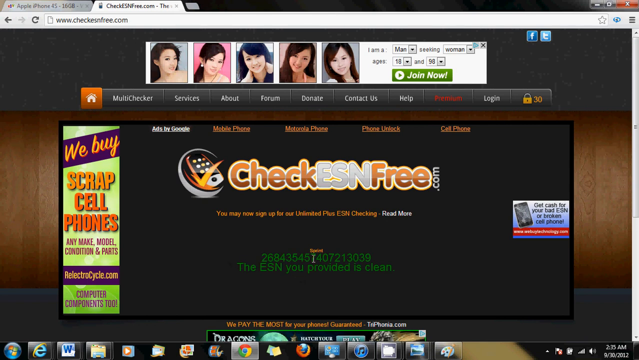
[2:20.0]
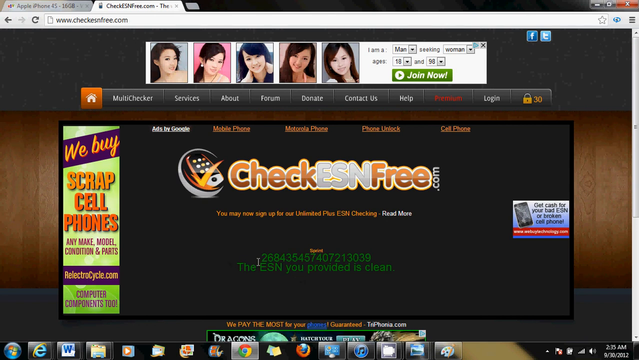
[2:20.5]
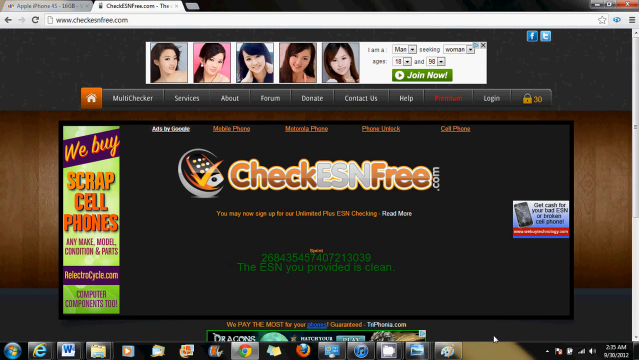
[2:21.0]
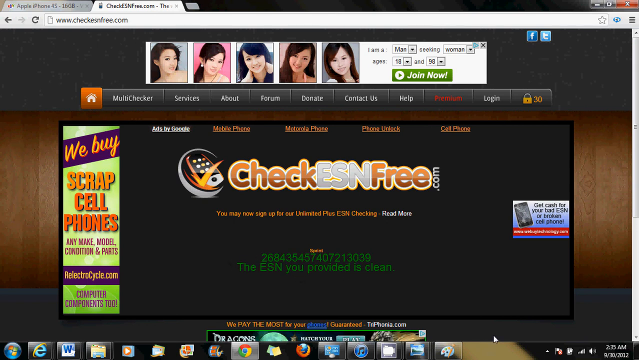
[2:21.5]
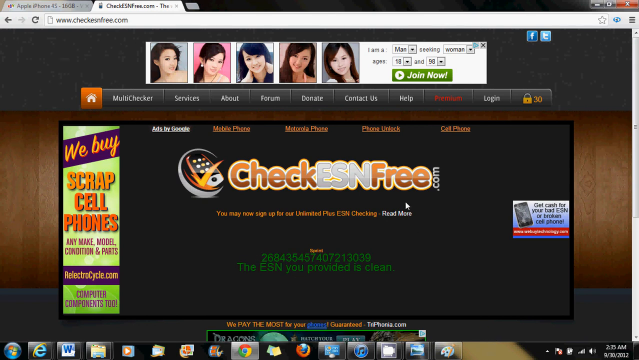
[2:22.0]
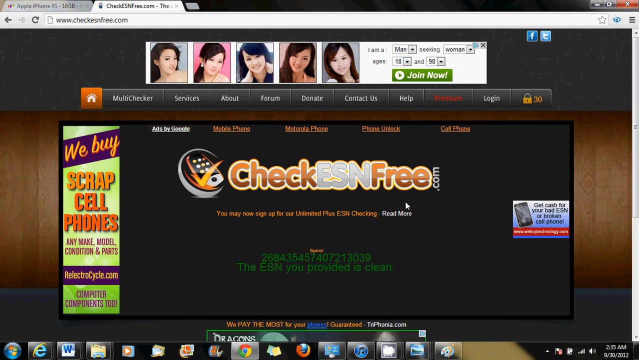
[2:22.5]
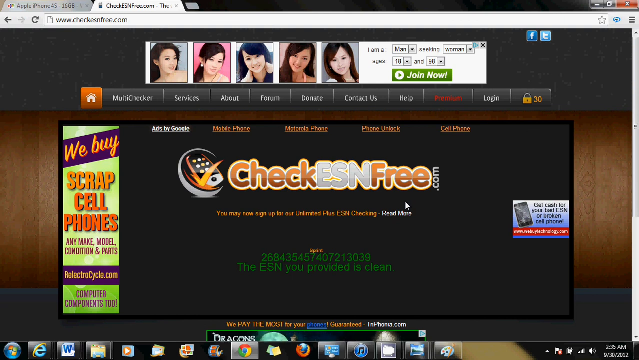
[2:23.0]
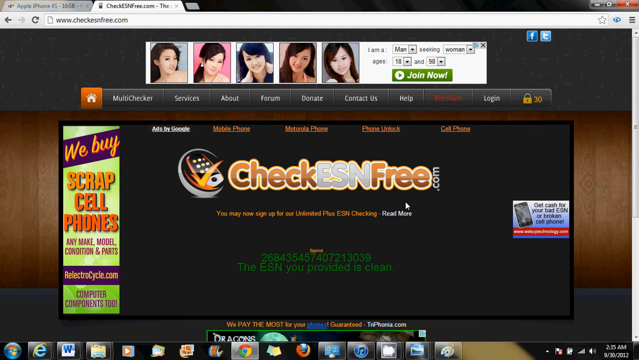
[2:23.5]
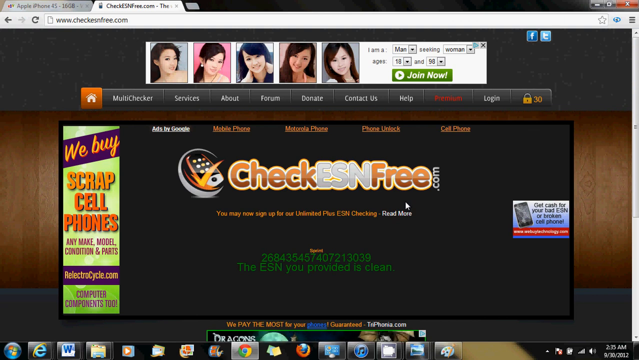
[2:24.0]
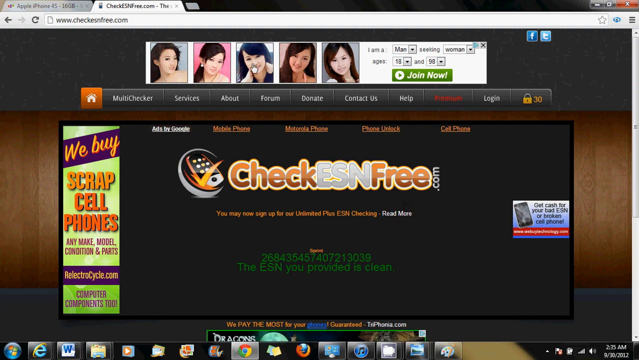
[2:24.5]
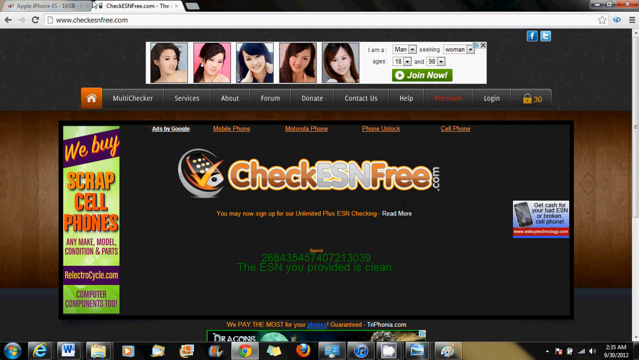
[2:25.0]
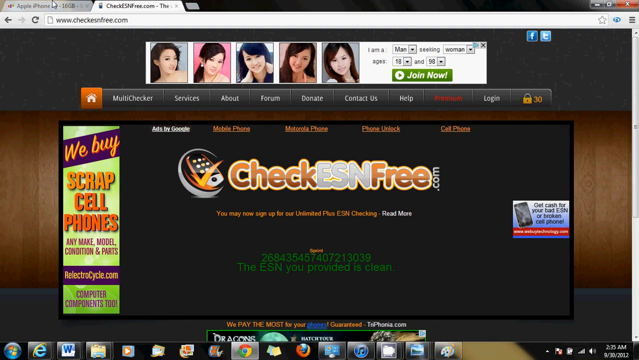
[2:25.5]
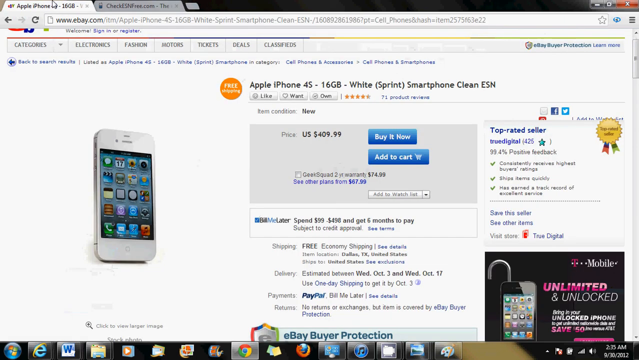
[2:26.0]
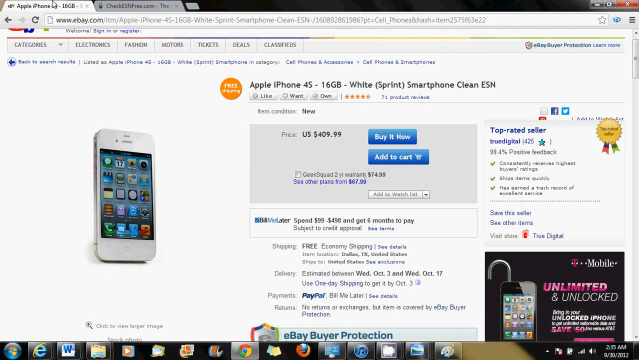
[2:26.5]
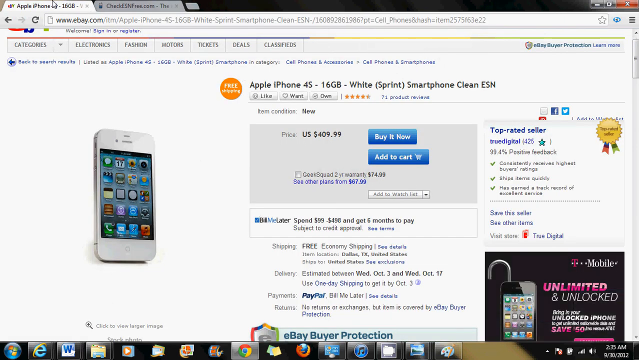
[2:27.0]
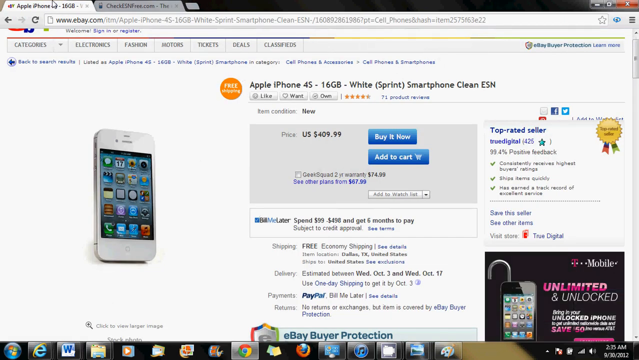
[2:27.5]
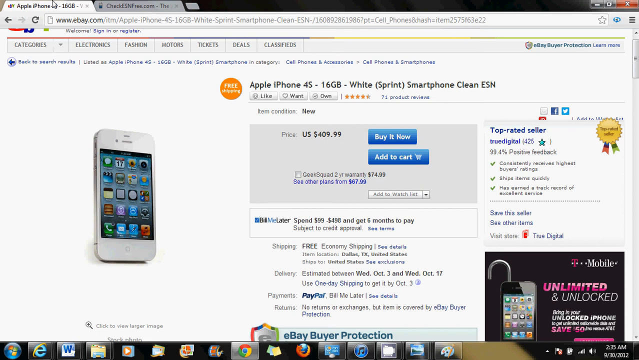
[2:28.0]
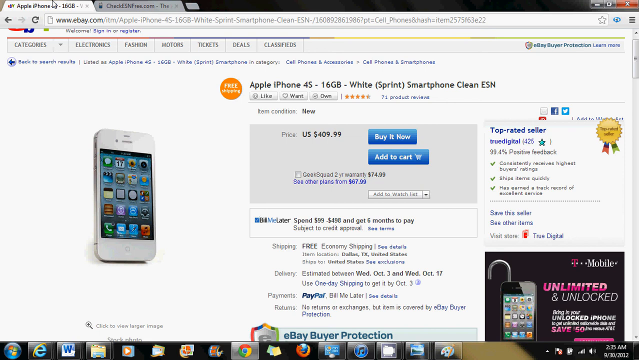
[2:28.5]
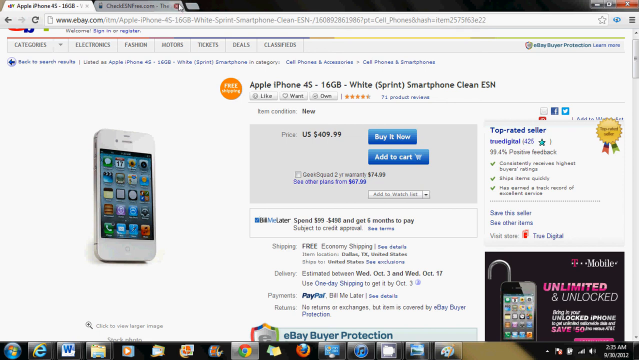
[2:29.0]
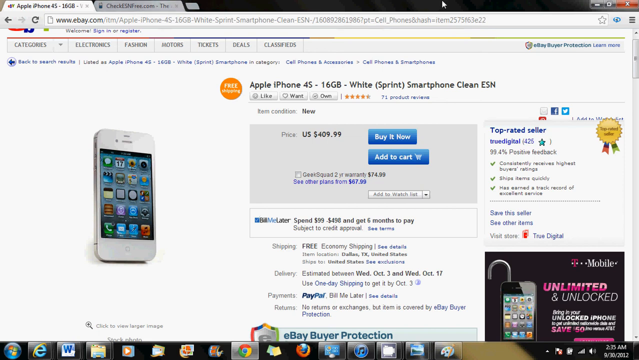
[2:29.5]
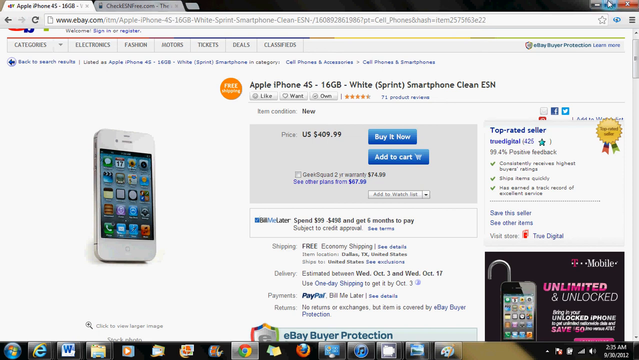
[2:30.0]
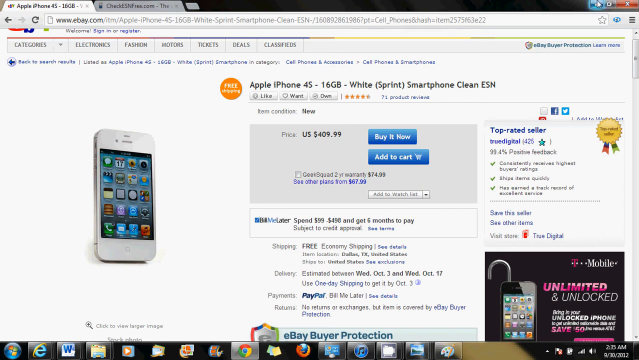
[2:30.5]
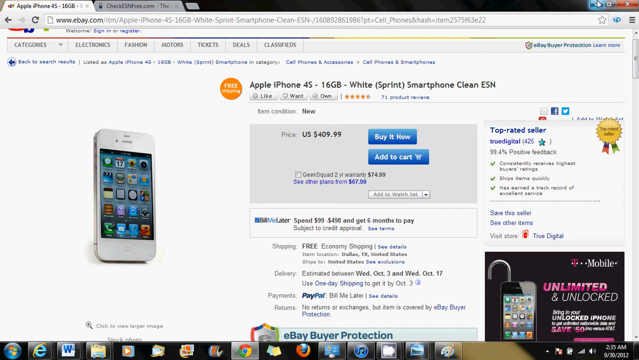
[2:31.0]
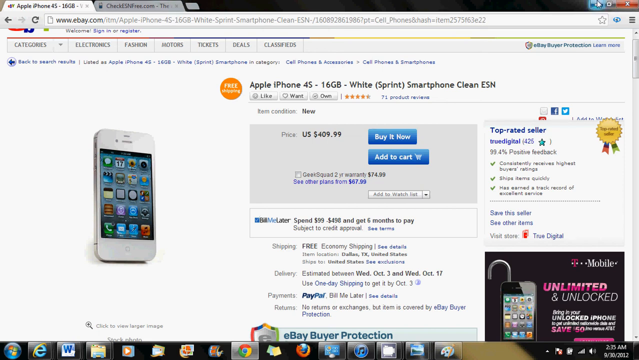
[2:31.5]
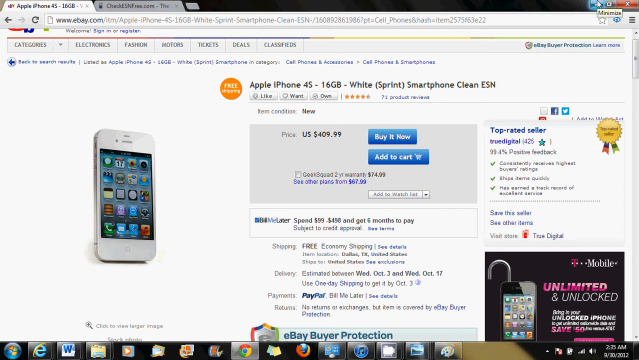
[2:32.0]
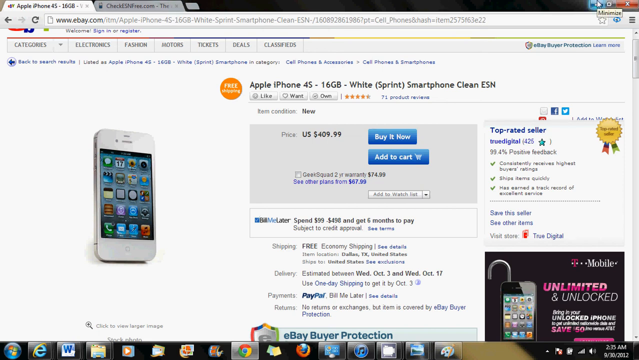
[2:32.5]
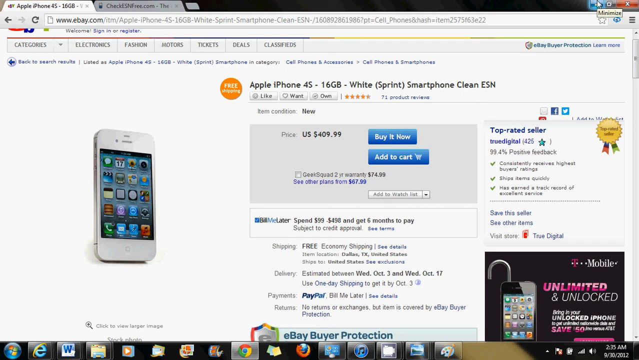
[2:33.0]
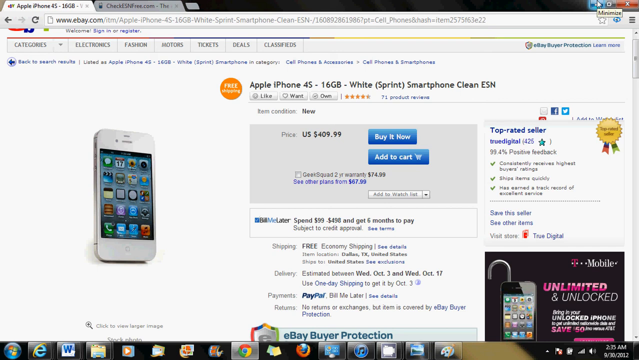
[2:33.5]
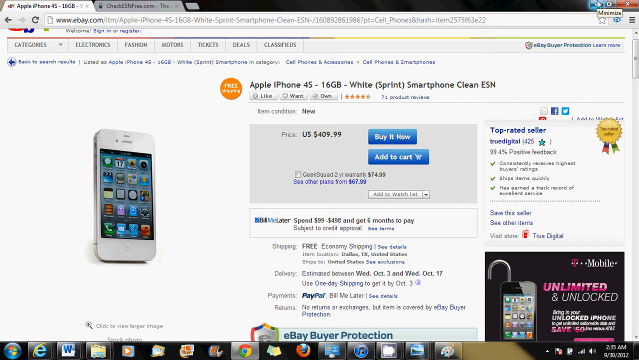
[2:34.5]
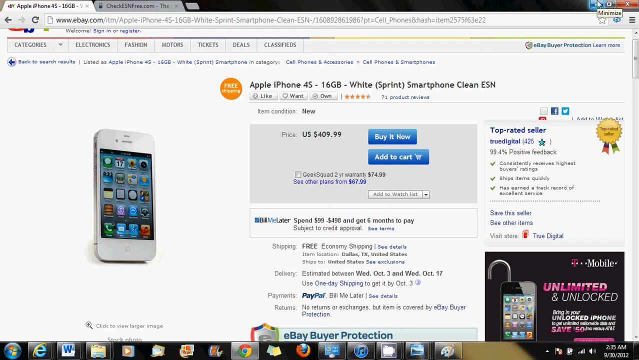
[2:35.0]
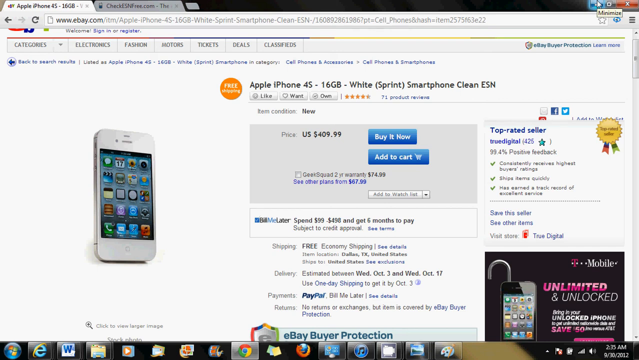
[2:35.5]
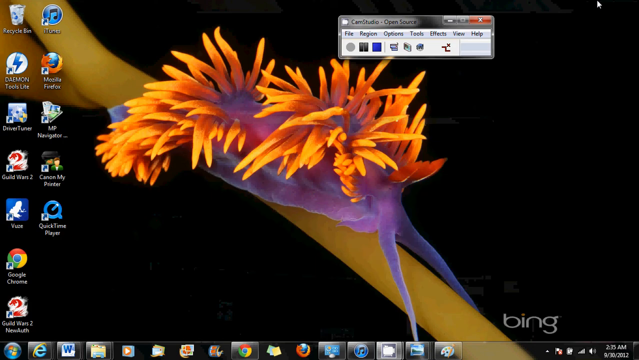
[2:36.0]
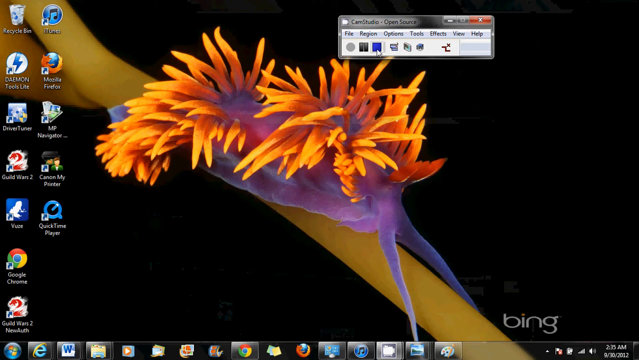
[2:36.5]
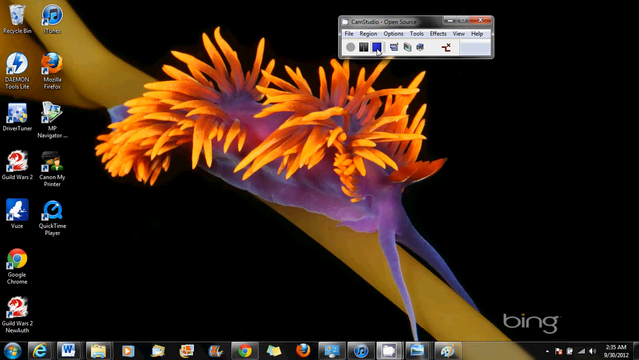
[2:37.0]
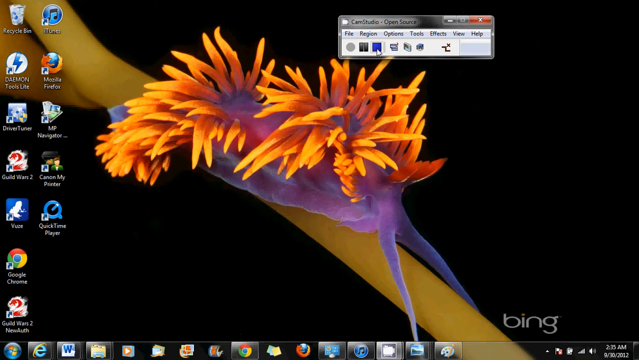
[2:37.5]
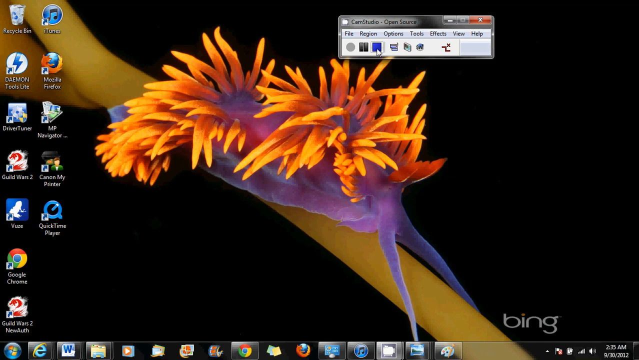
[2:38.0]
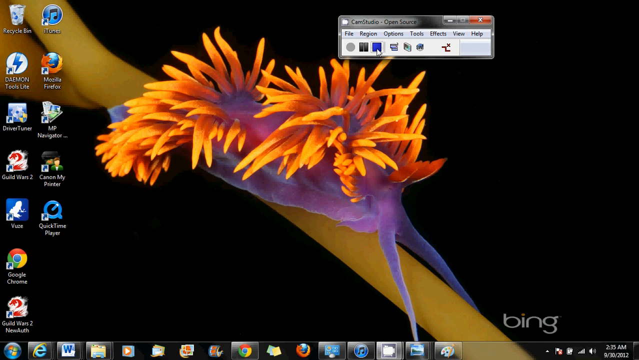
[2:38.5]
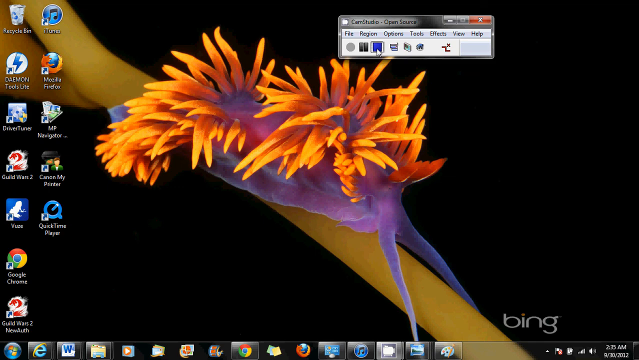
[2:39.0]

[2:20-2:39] The person goes back to the eBay listing, changes tabs at the top, and minimizes the window. They then press a blue square button under the small open source window that was open earlier, apparently to stop the screen recording. The Cam Studio window is quite small, like a thin rectangular line, with minimize and X buttons. It has a menu bar at the top with file, region, options, tools, effects, view, and help, and below that are symbols: a gray circle, a black square to the right, a blue square, and several other icons. The video is somewhat fuzzy, making them hard to make out.